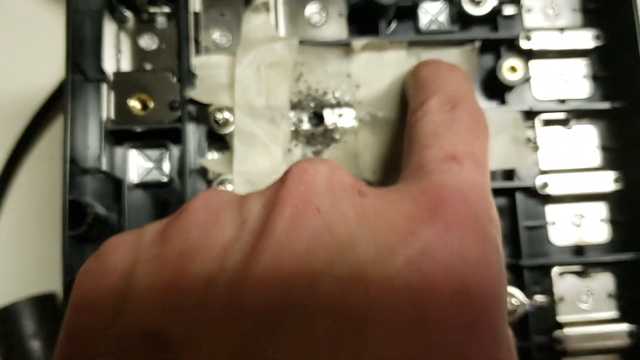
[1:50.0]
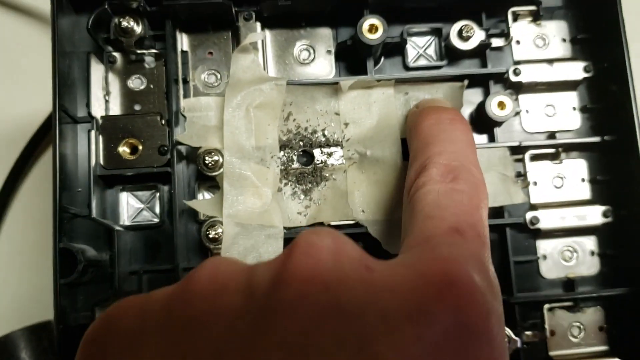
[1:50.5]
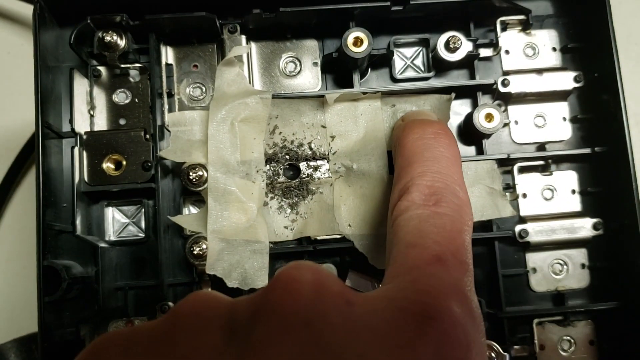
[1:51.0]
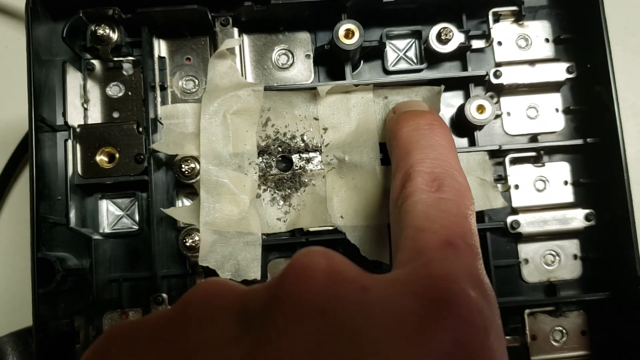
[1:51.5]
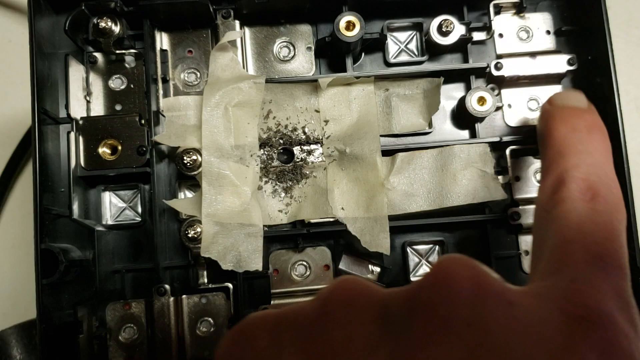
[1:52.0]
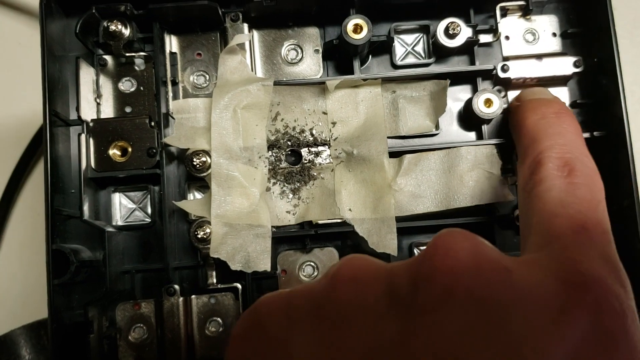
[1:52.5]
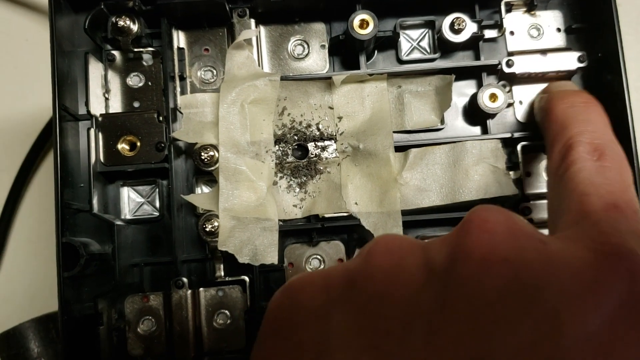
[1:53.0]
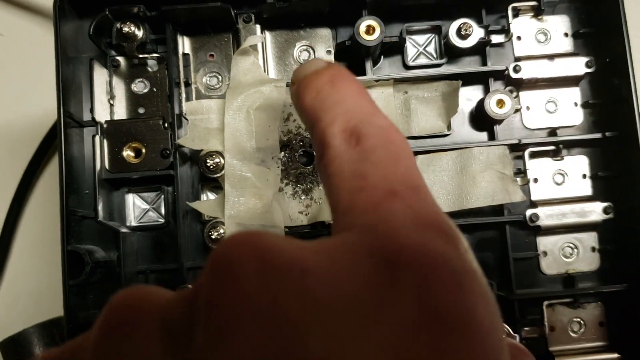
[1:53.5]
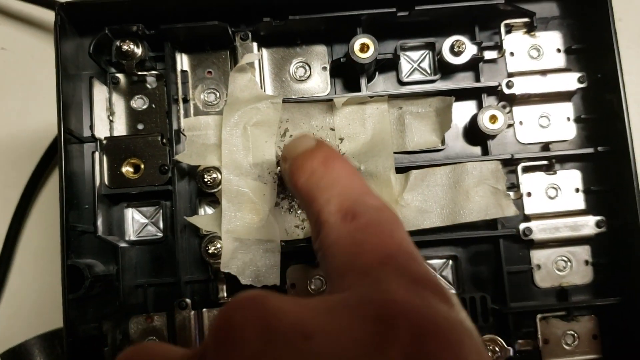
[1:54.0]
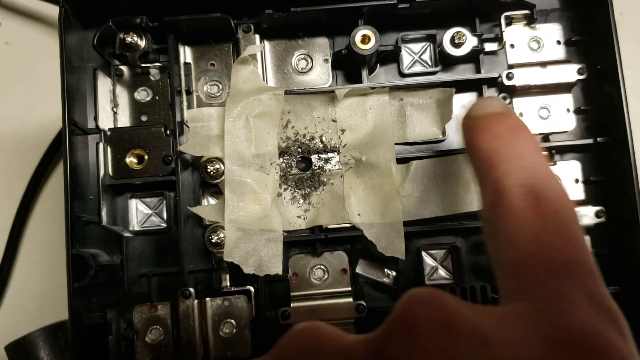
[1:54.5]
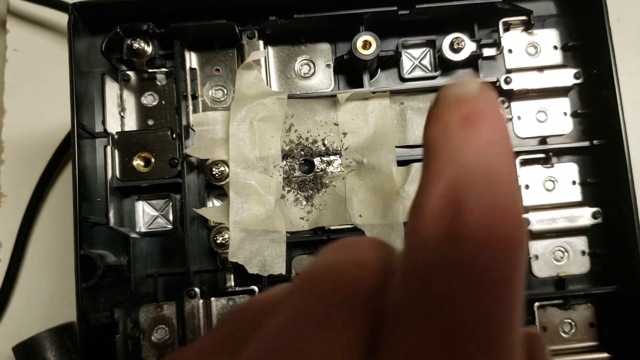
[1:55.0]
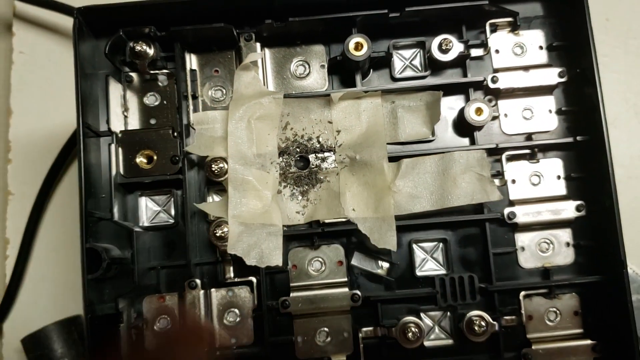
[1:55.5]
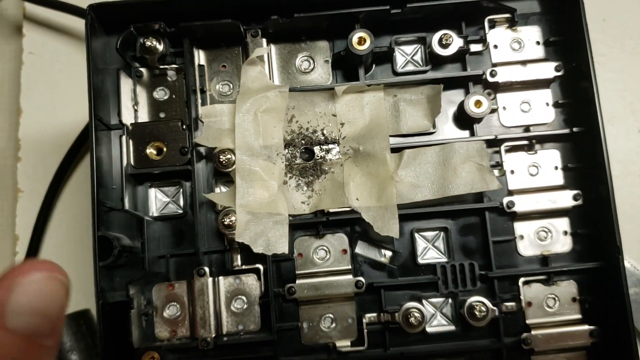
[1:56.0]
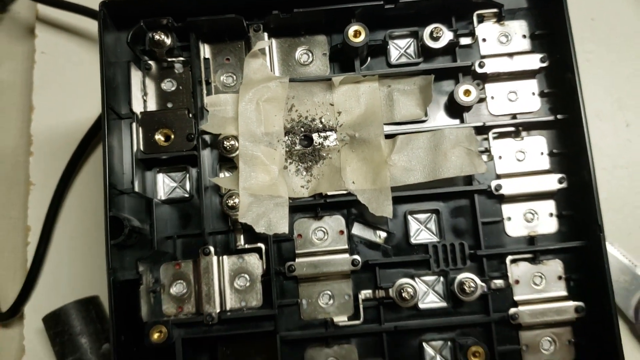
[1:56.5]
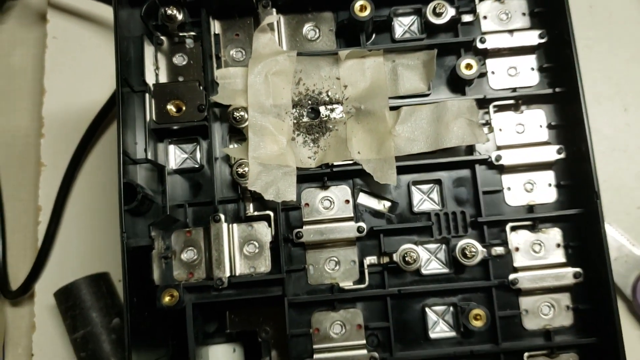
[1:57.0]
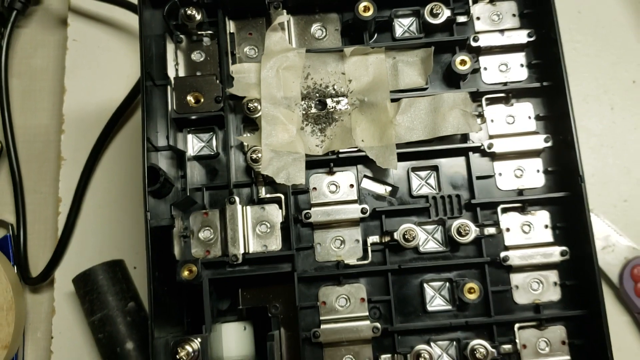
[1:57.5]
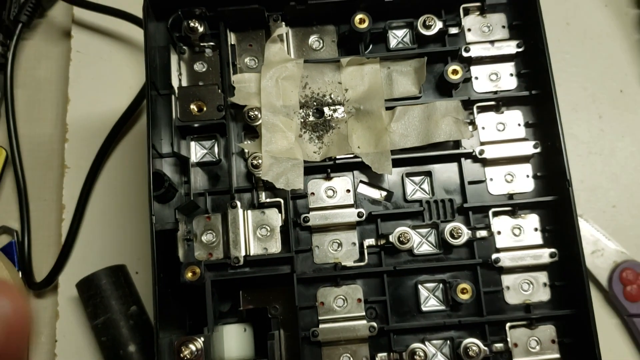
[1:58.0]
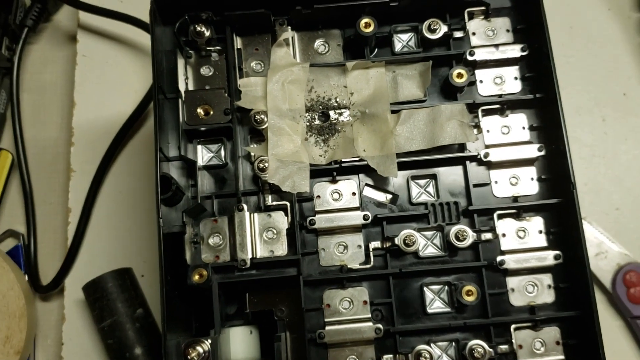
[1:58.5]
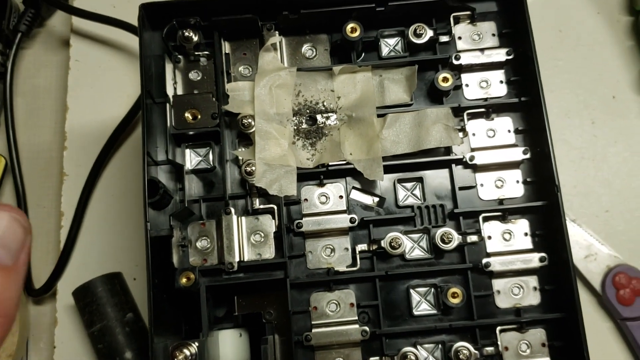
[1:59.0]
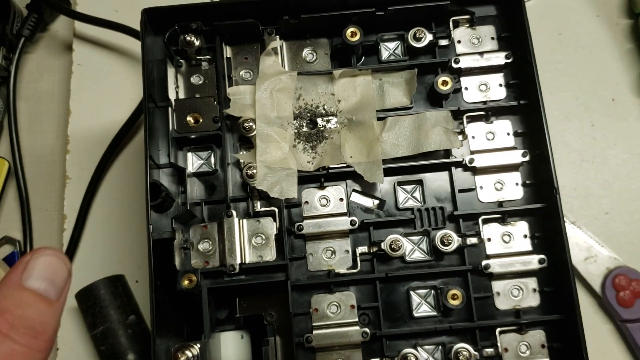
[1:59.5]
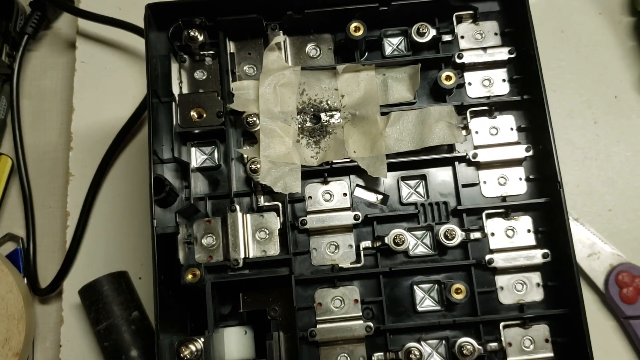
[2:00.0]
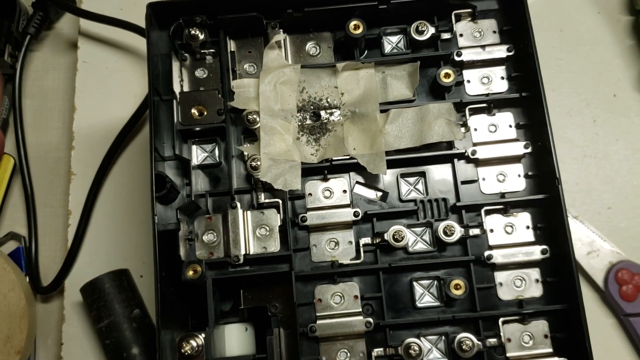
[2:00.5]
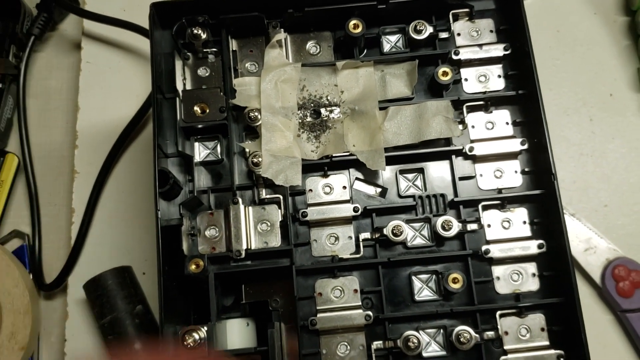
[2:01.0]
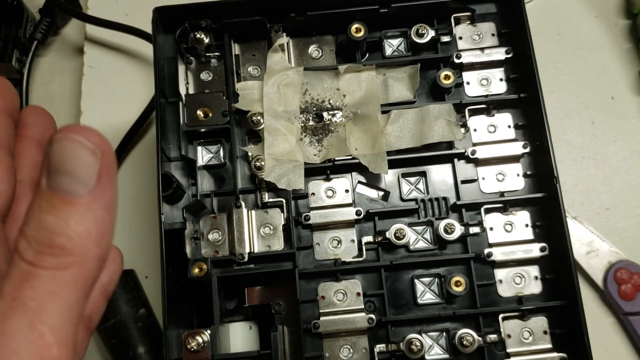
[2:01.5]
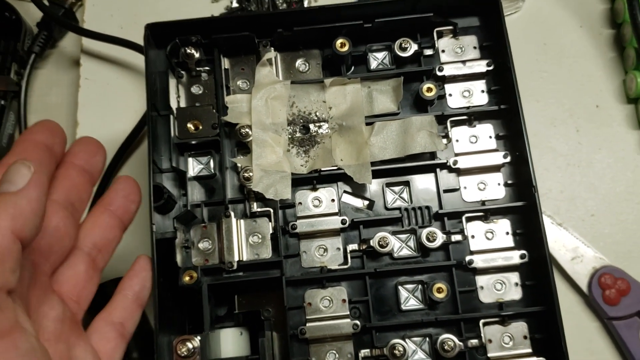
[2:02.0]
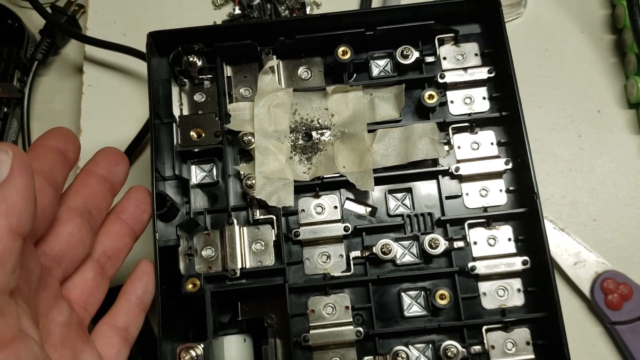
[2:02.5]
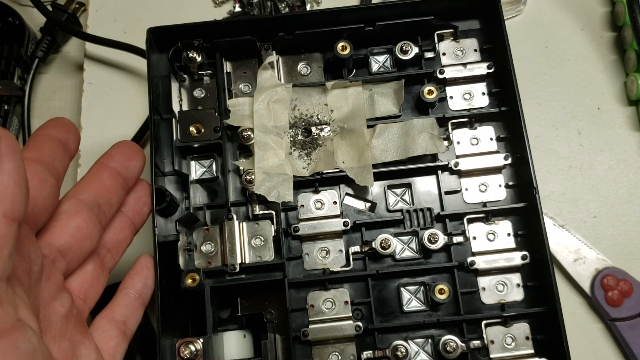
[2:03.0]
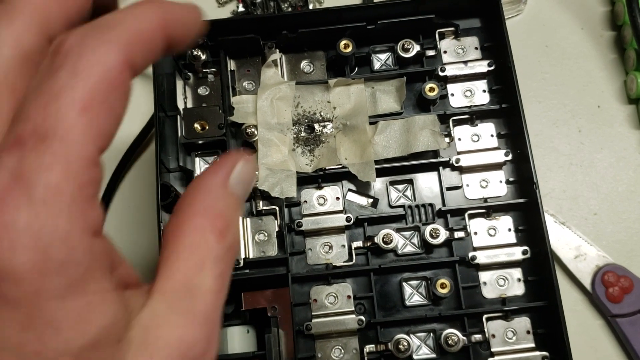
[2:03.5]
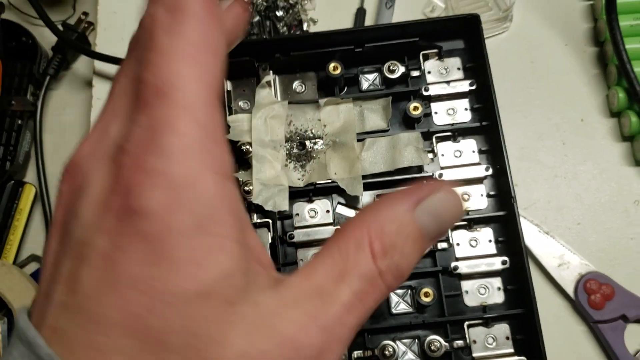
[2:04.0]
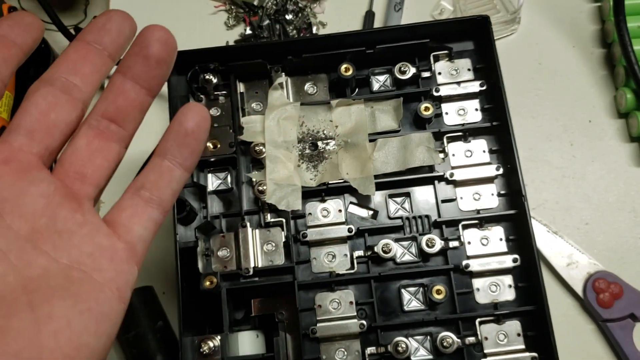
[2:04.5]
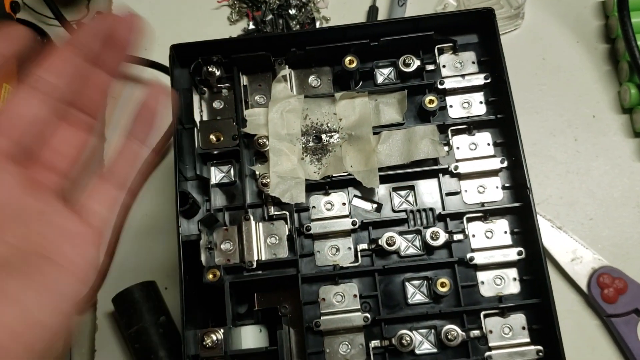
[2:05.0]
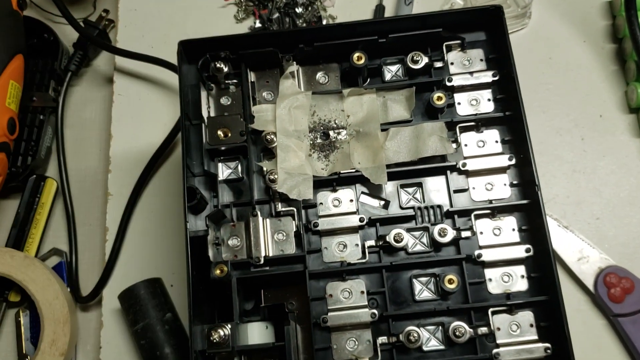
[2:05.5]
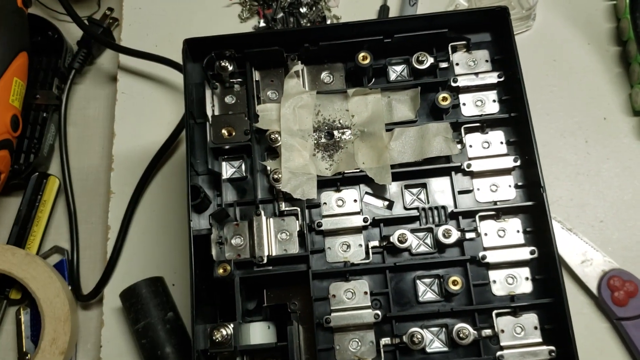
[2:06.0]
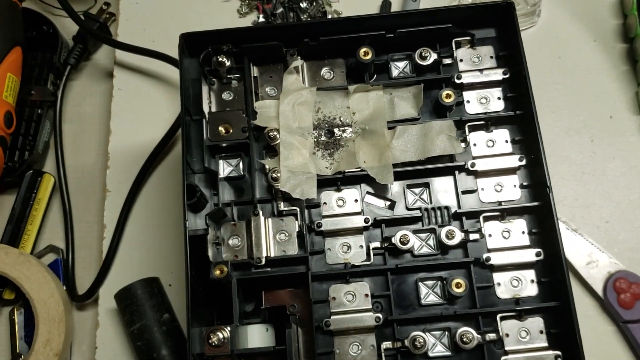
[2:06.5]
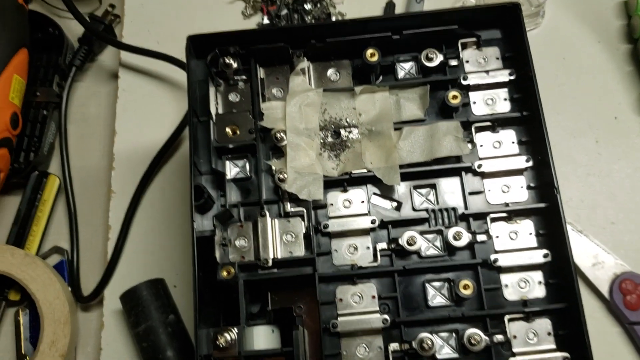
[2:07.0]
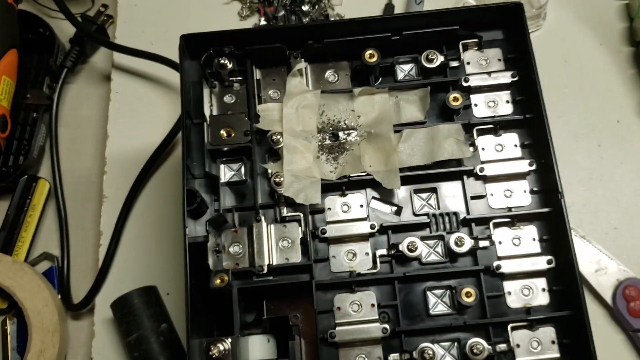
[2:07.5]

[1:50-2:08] He points at the tape and then at various other parts of the item. His hands move around quite a lot, so it is difficult to tell whether he is actually pointing at something or just moving his hands. A pair of scissors is in the background; they do not look industrial and look more like kitchen scissors.